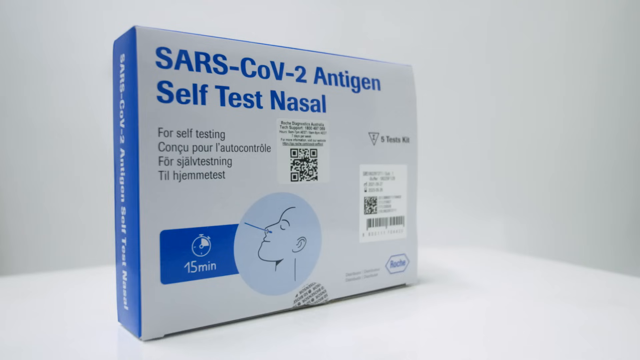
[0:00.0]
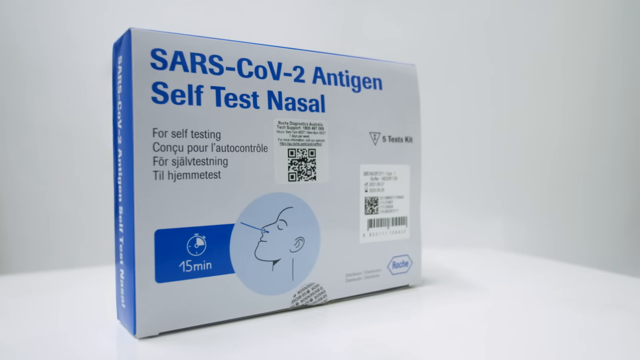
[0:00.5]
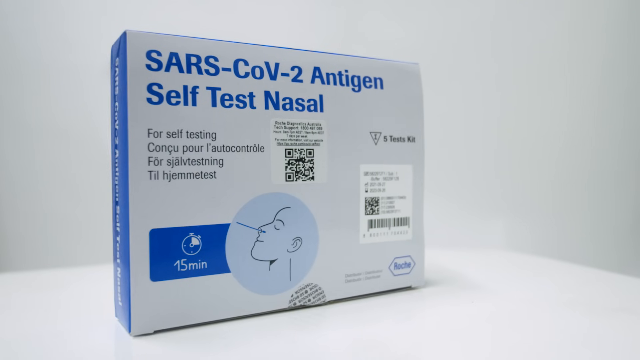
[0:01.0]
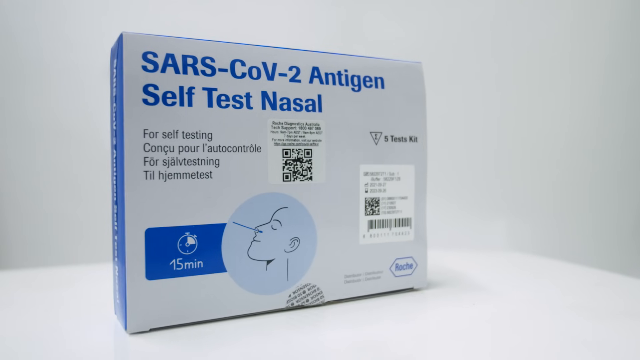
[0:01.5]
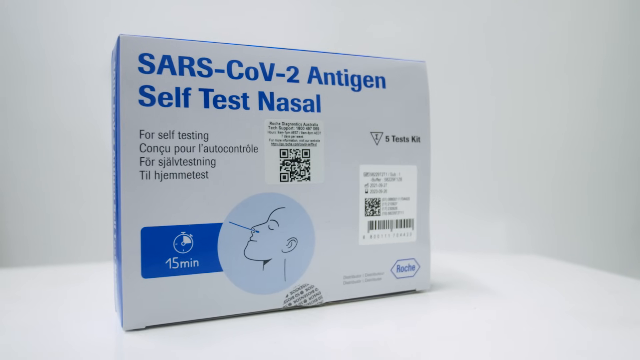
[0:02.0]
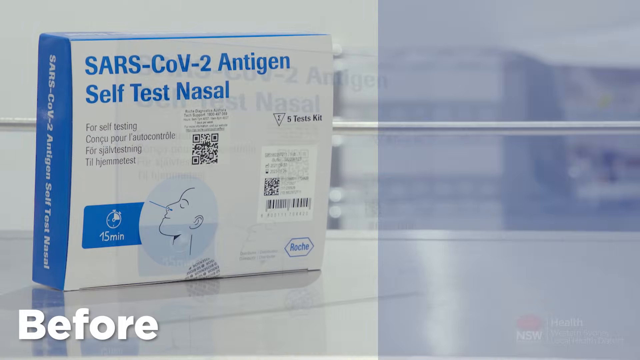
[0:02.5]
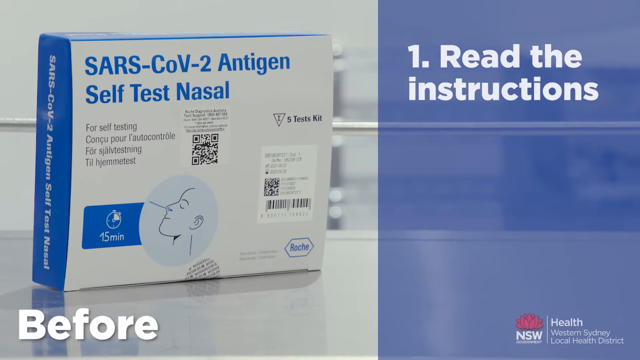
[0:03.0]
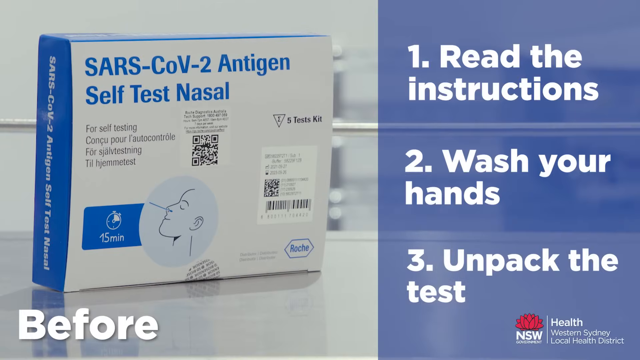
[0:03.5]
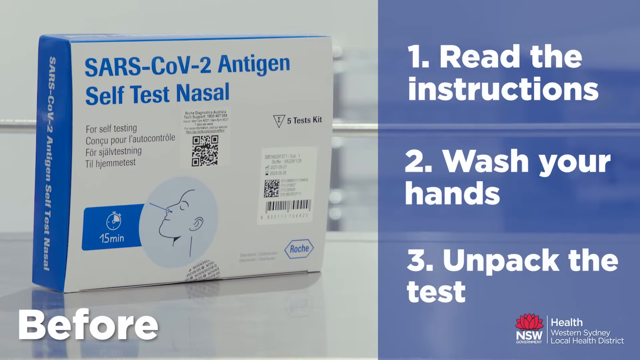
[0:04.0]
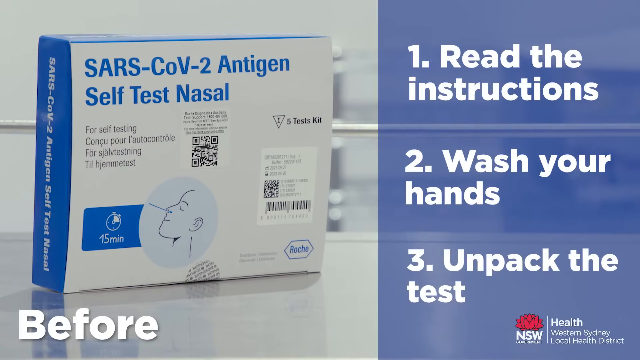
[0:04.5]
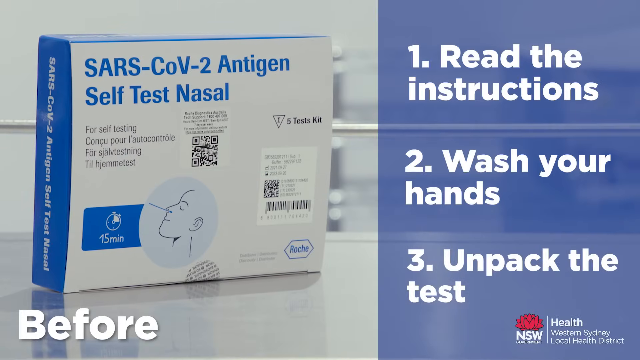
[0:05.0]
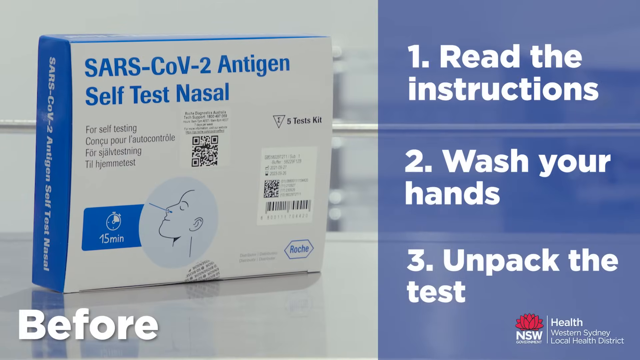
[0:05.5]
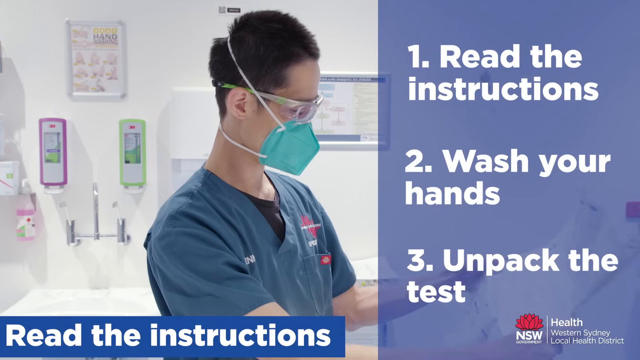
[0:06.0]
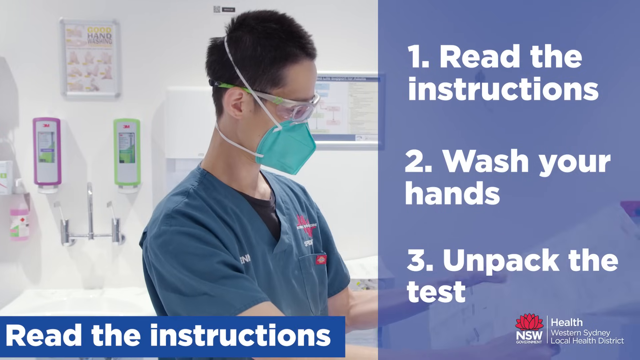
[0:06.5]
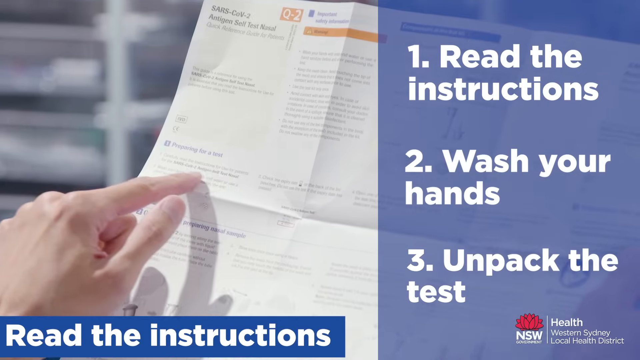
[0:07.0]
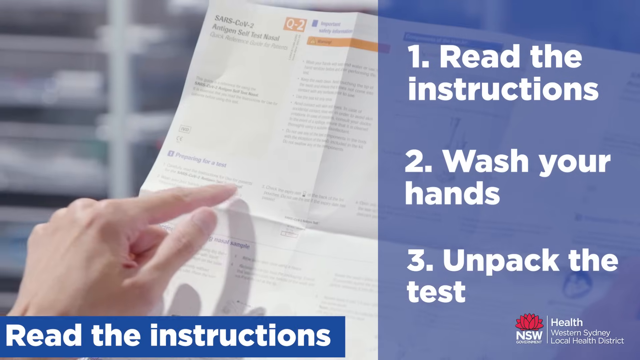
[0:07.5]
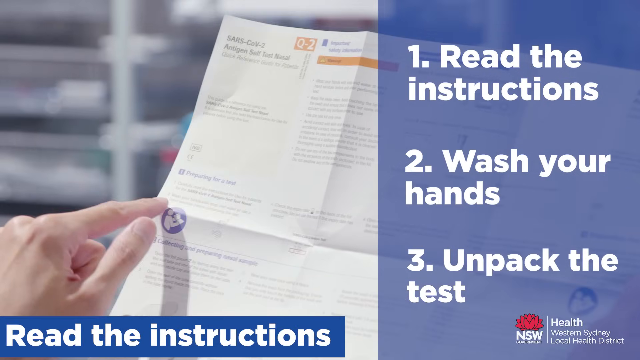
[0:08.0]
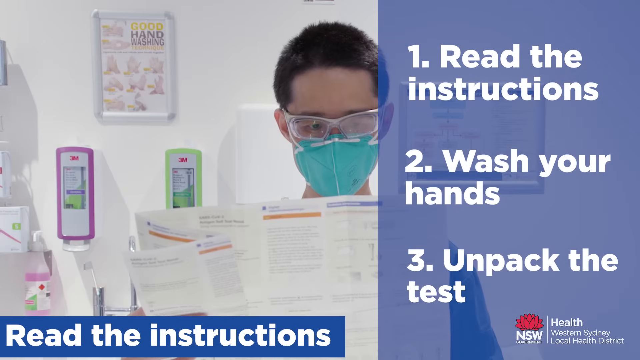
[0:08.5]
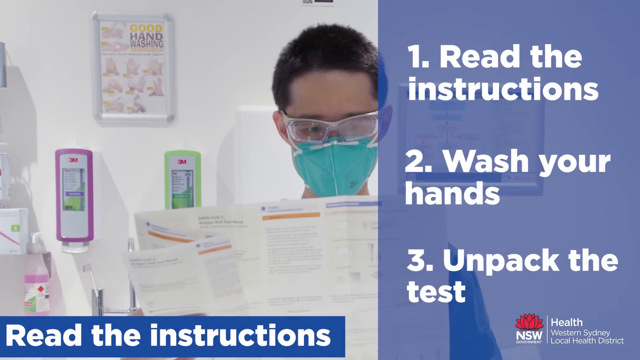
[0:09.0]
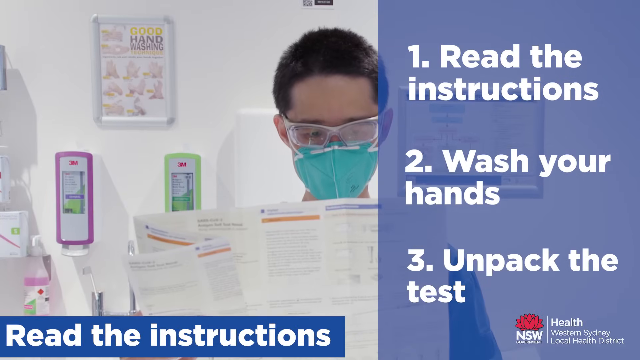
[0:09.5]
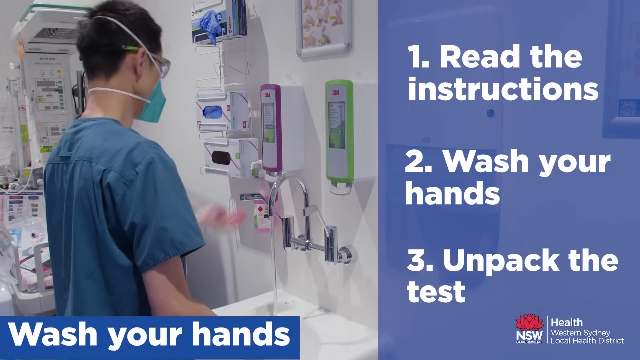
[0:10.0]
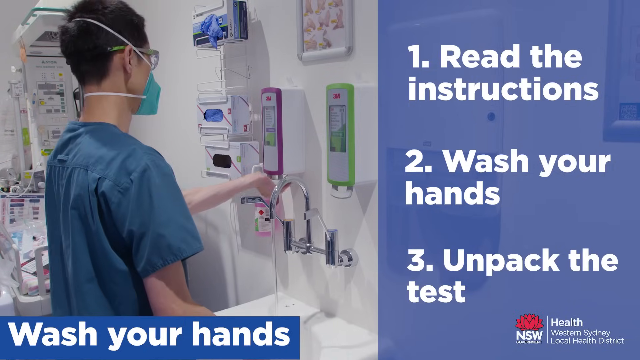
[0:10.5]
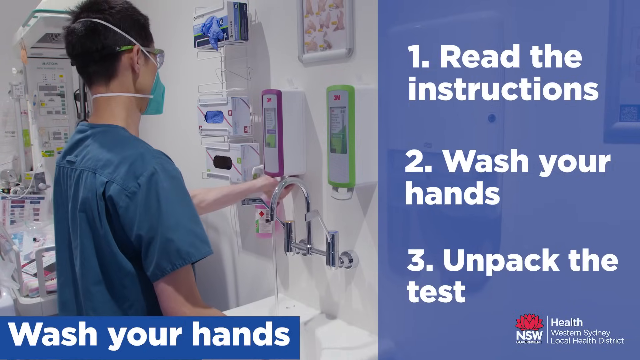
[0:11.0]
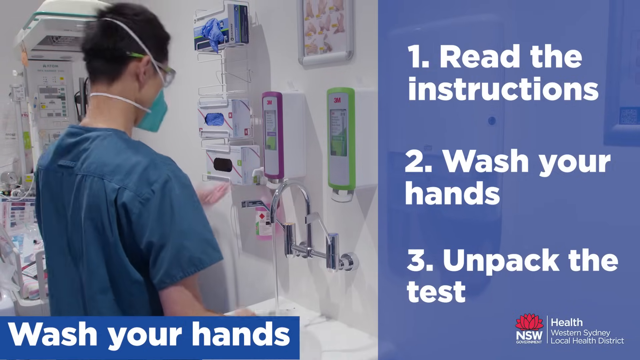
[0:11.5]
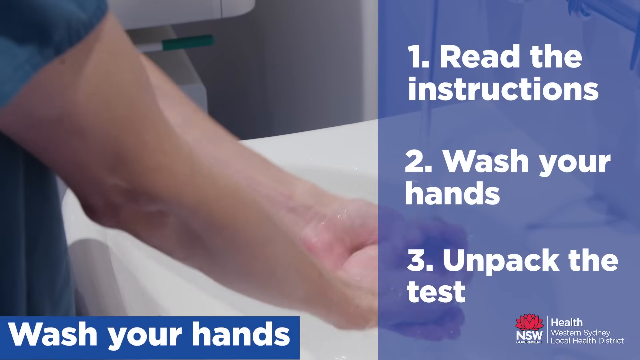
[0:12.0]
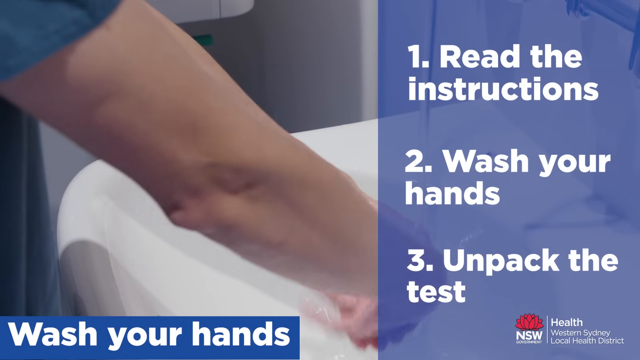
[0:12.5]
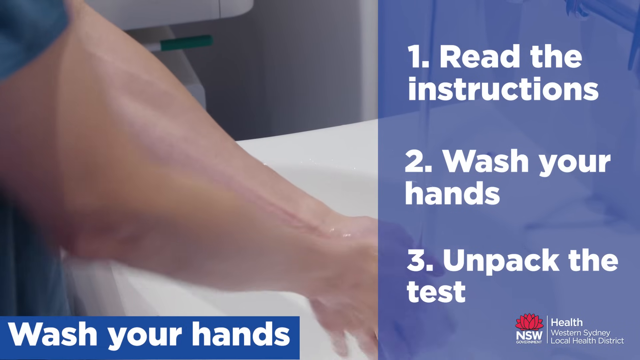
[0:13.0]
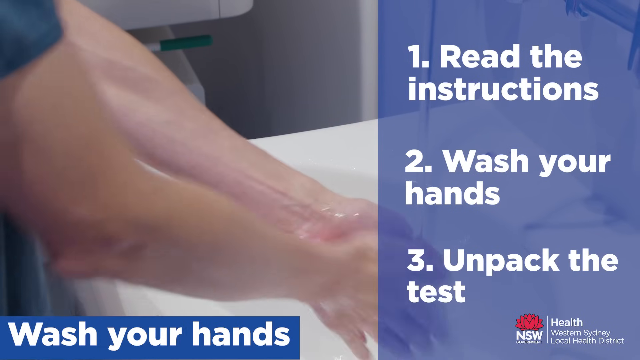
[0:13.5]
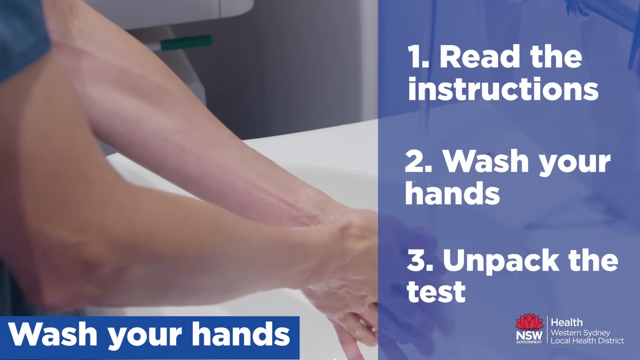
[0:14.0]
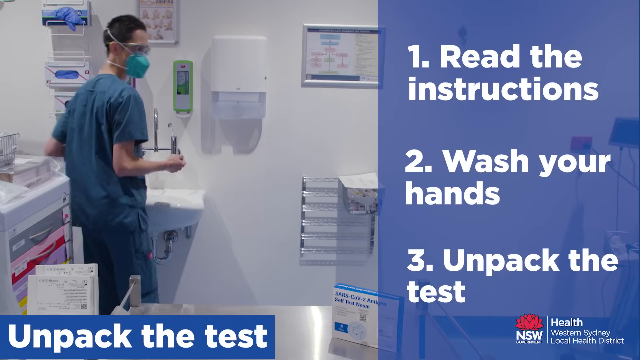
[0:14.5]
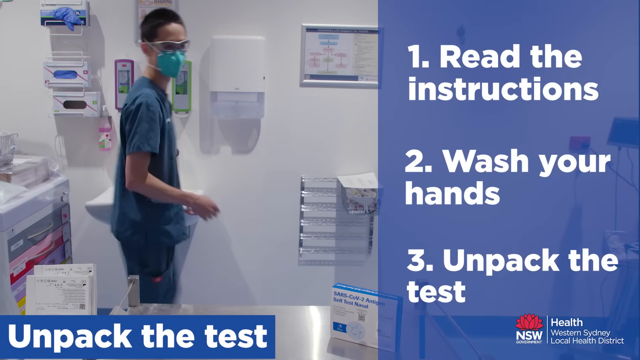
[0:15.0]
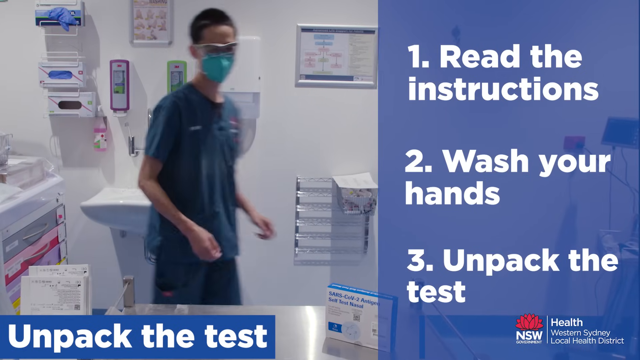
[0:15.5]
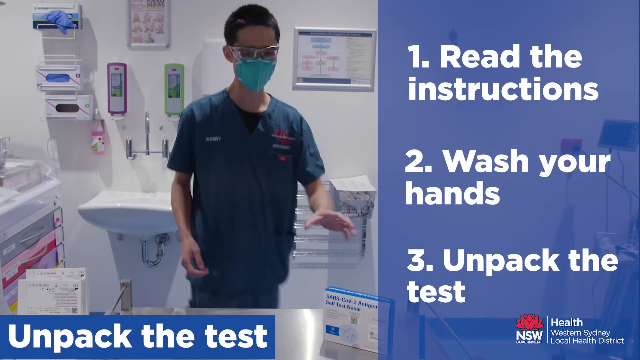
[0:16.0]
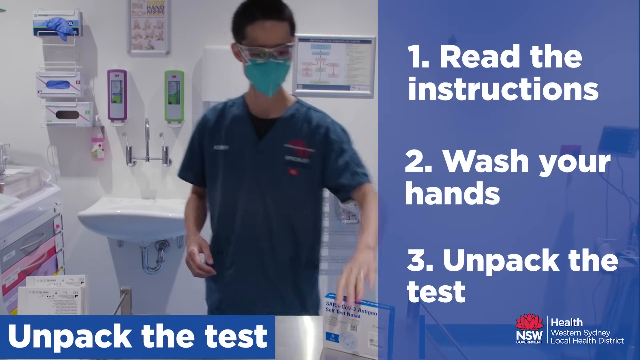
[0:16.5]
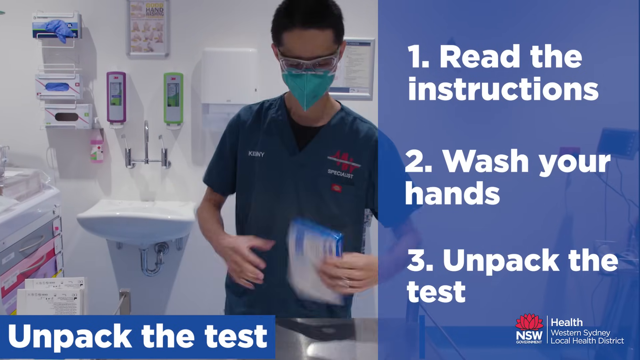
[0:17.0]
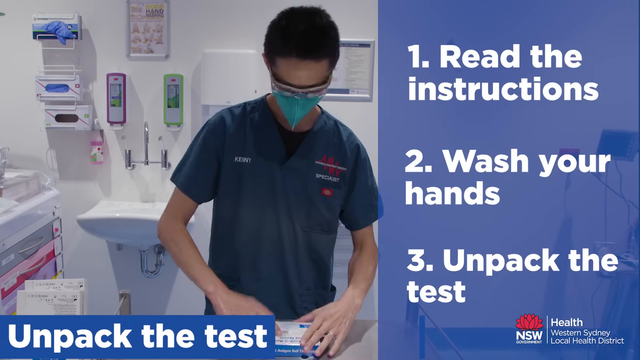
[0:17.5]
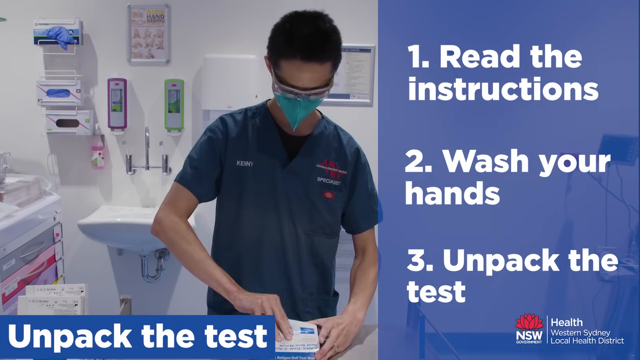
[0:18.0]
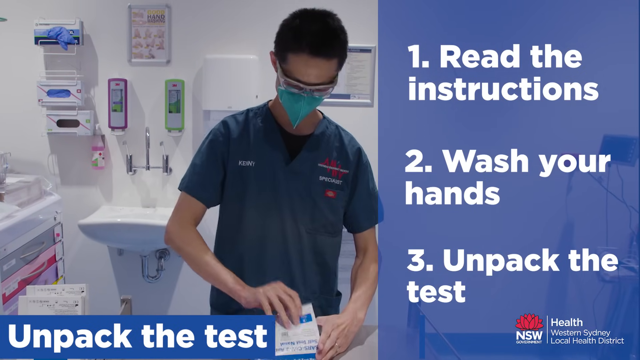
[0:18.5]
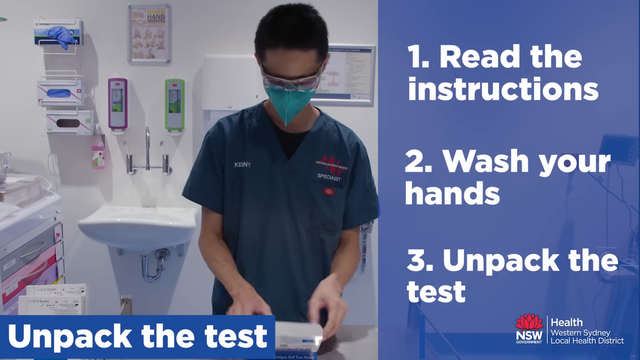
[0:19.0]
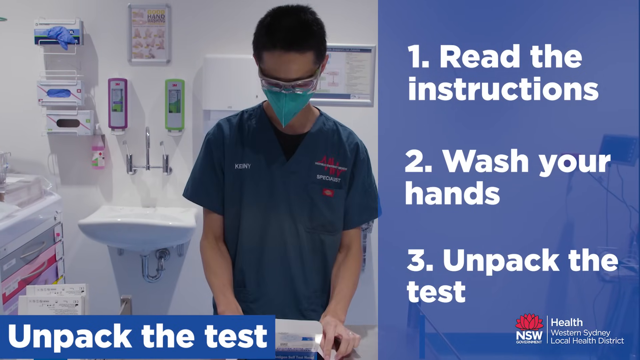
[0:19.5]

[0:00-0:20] A blue and white box stands up on a countertop. It reads "SARS-COV-2 antigen self-test nasal" and "for self-testing," and the same text appears in a couple of other languages. The box has a drawing of someone with a swab up their nose and a clock showing 15 minutes. There is a QR code, the text "5 test kit," and a barcode. At the bottom of the box is the brand "Roche." There appears to be a white sticker on it carrying the QR code and the barcode. The front of the box is white with blue writing, and the side is blue with white writing. On-screen instructions read "read the instructions" as number one, "wash your hands" as two and "unpack the test" as three, followed by a picture of someone in a face mask reading the instructions.